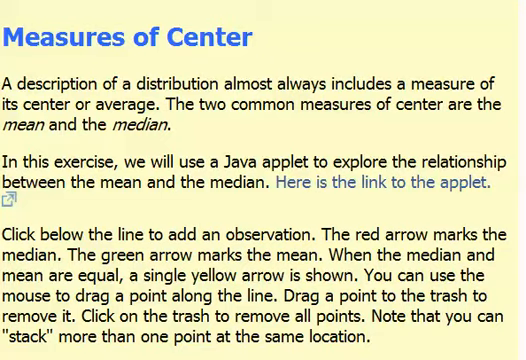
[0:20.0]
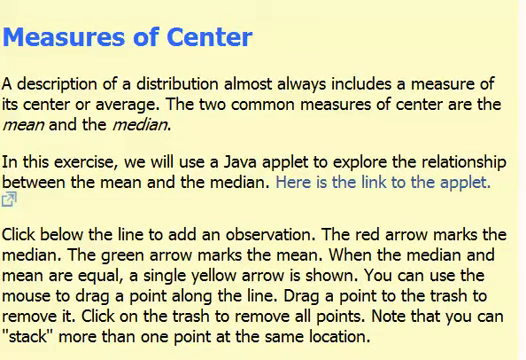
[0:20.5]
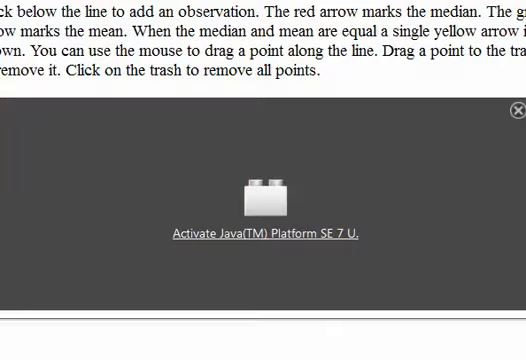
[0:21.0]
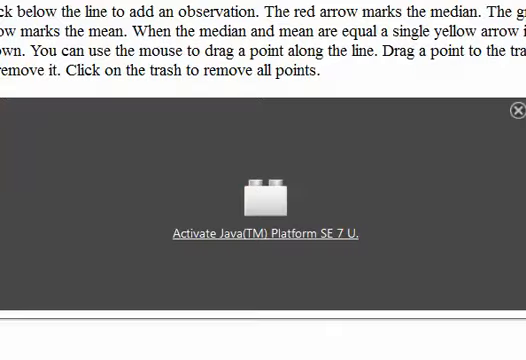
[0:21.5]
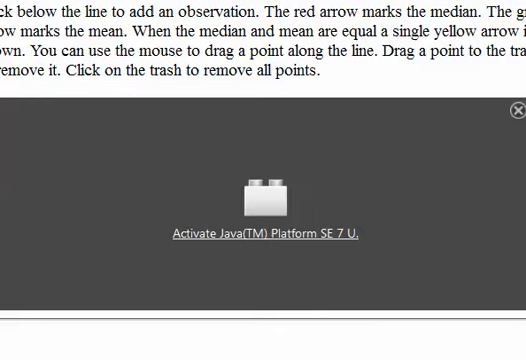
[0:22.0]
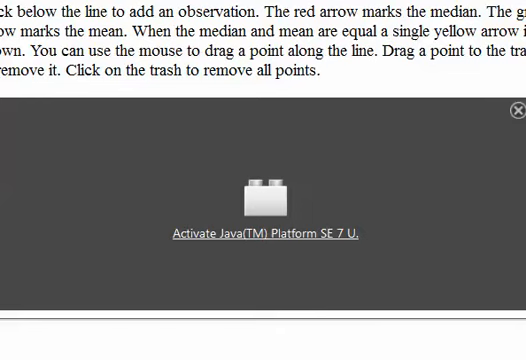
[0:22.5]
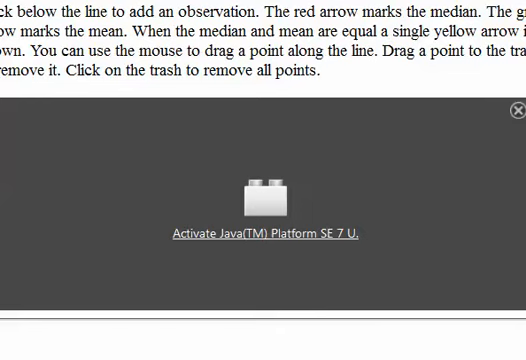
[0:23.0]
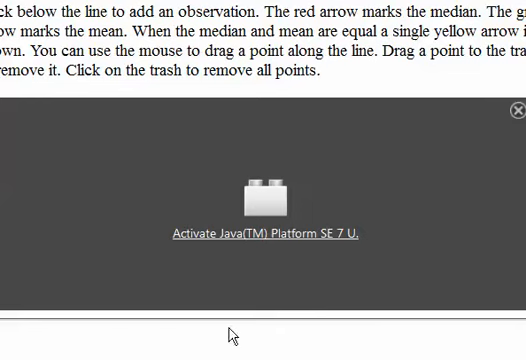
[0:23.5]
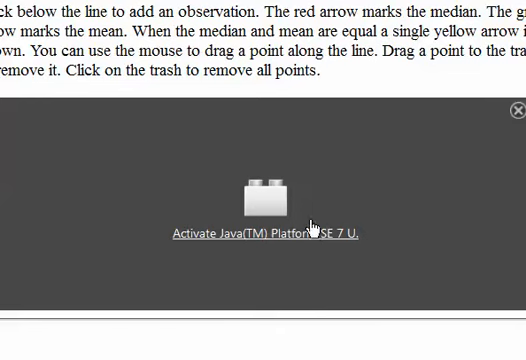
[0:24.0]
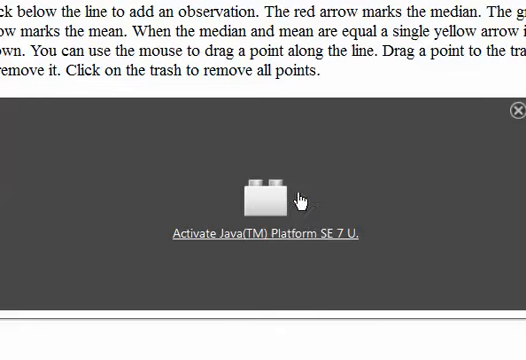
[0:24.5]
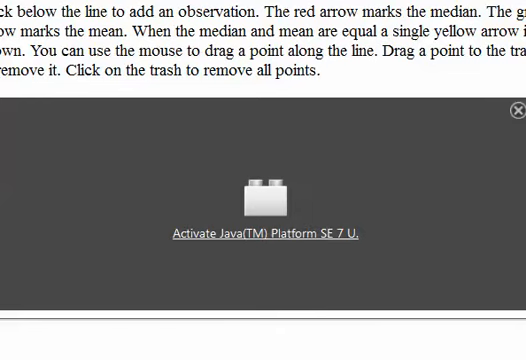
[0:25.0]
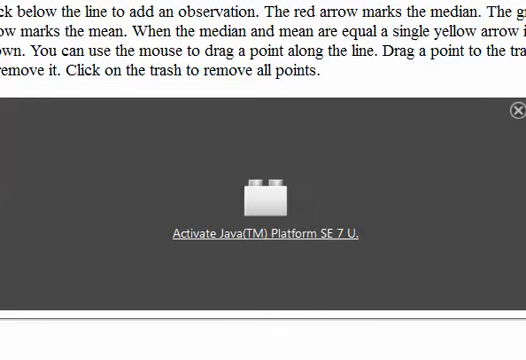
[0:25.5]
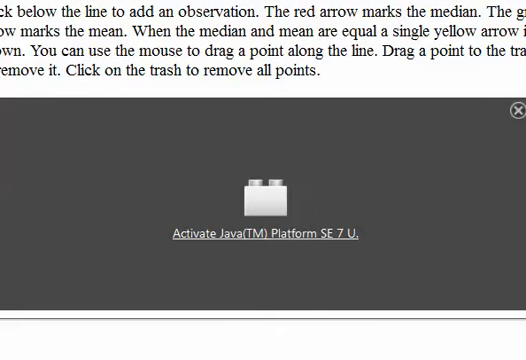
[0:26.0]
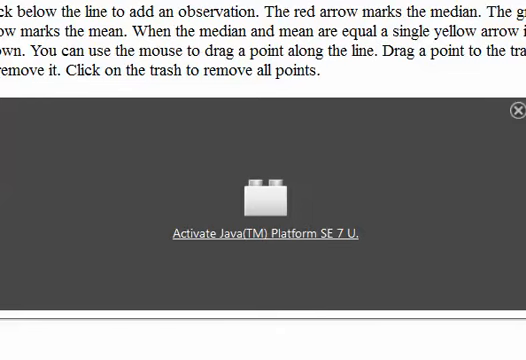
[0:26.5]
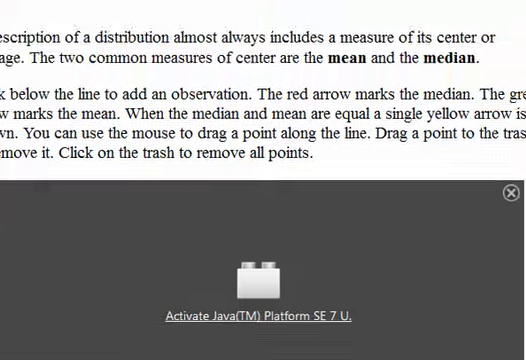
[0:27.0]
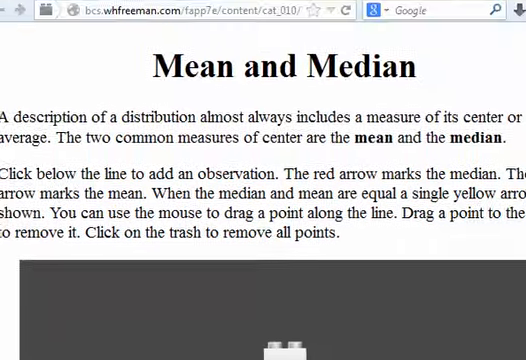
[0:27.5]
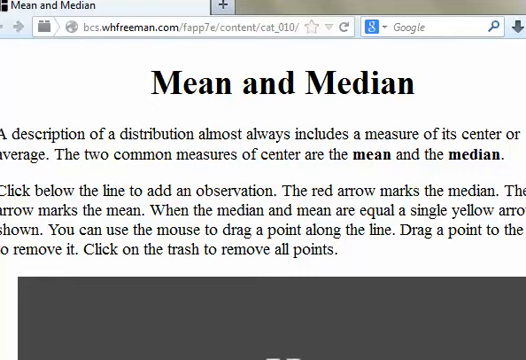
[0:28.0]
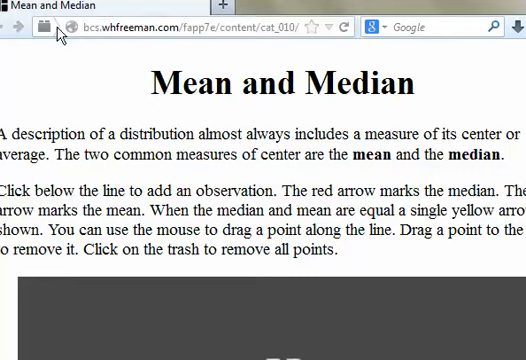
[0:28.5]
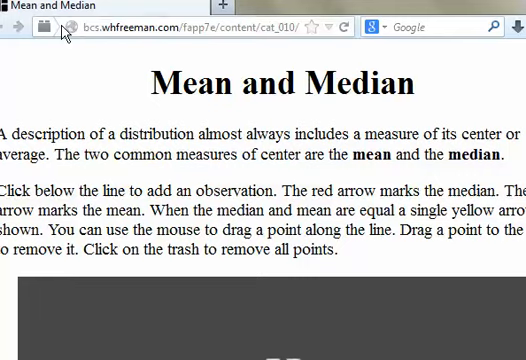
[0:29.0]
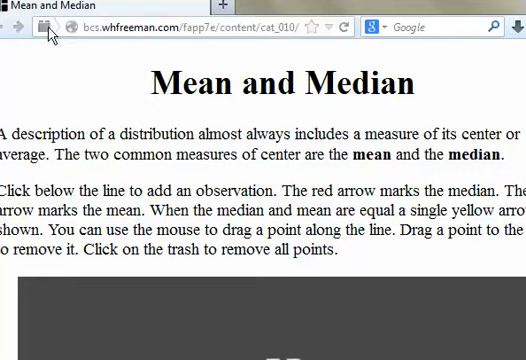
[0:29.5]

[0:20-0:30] The page shows the text under the measures of center heading: "a description of a distribution always includes a measure of its center or average. The two common measures of center are the mean and the median." The video then transitions to another page with a Java applet in its bottom part that has not been activated; the applet area says "activate Java platform se7u." Above the applet is a description that is mostly cut off, though its last sentence reads "click on the trash to remove all points."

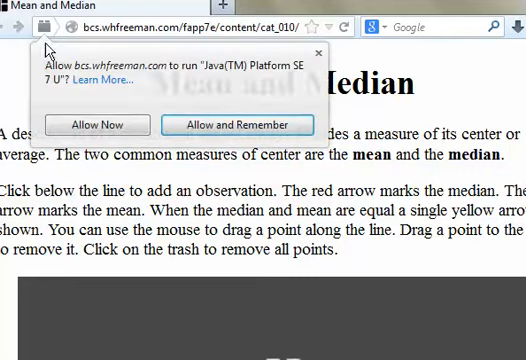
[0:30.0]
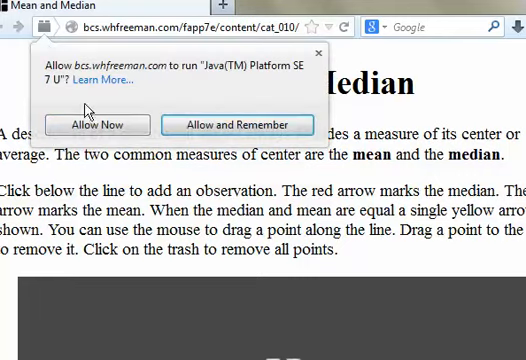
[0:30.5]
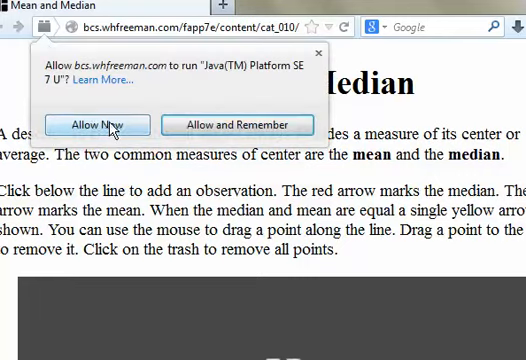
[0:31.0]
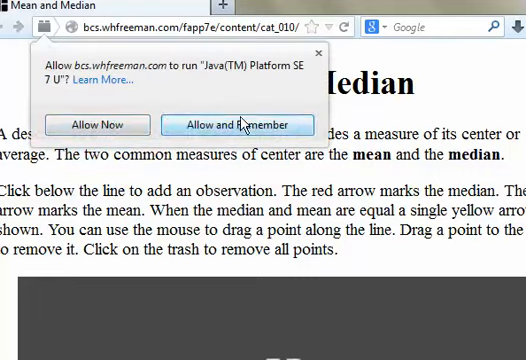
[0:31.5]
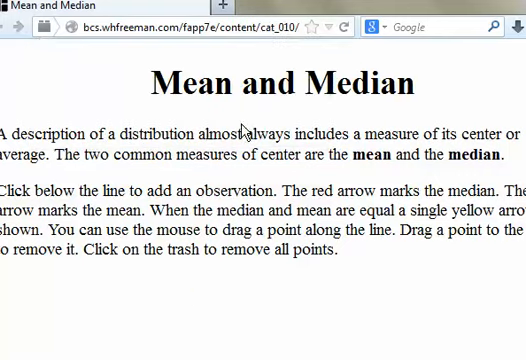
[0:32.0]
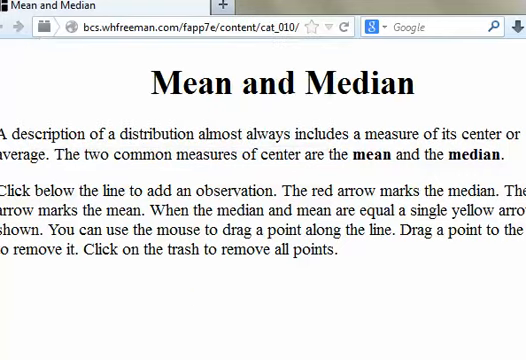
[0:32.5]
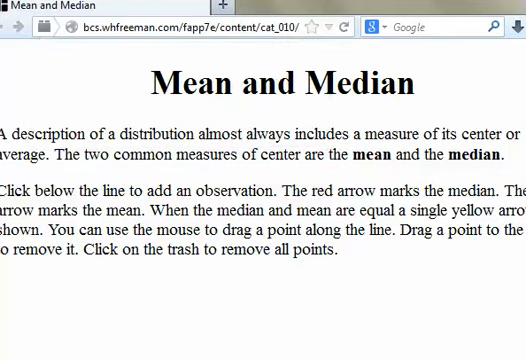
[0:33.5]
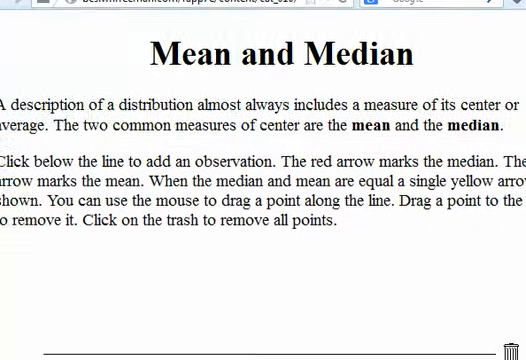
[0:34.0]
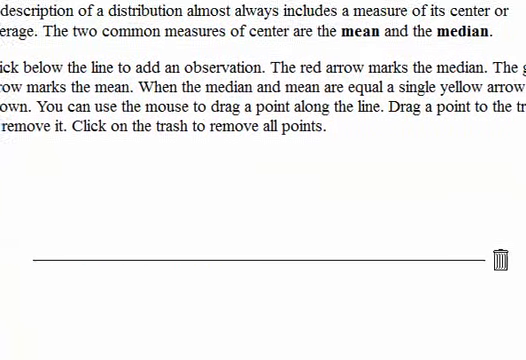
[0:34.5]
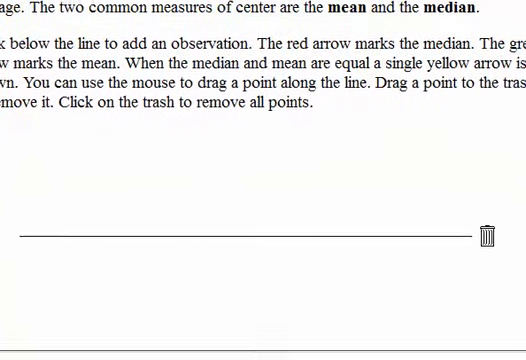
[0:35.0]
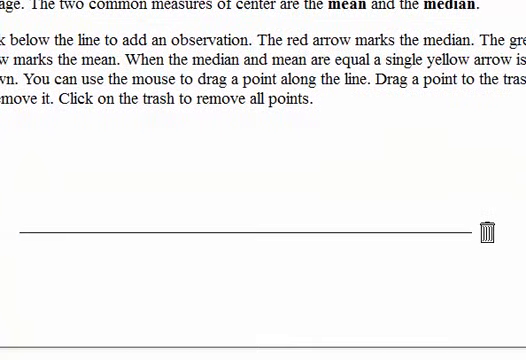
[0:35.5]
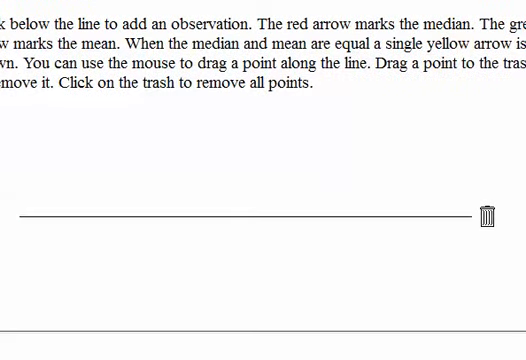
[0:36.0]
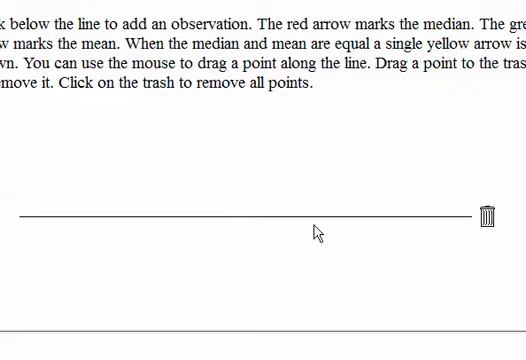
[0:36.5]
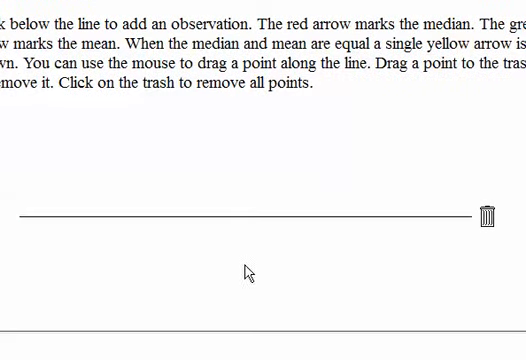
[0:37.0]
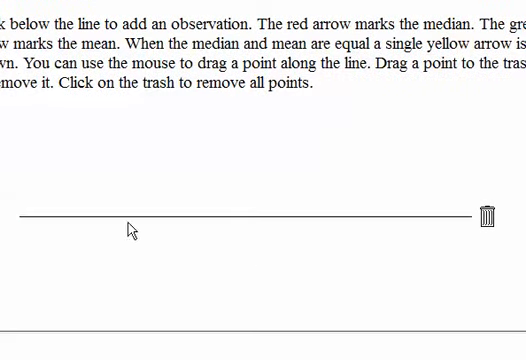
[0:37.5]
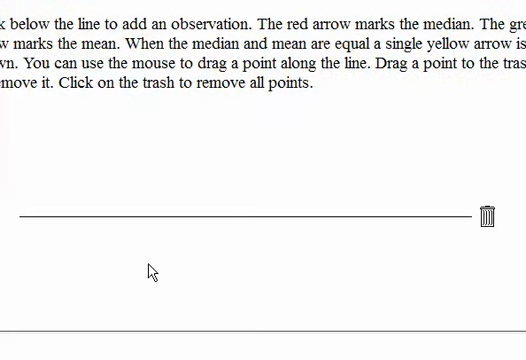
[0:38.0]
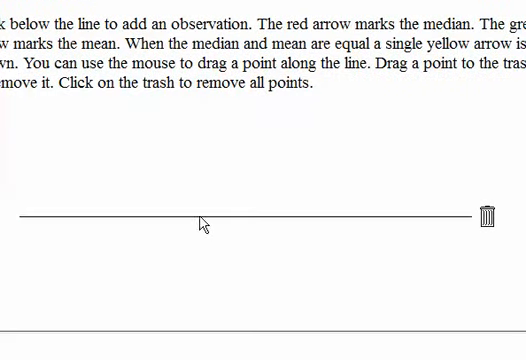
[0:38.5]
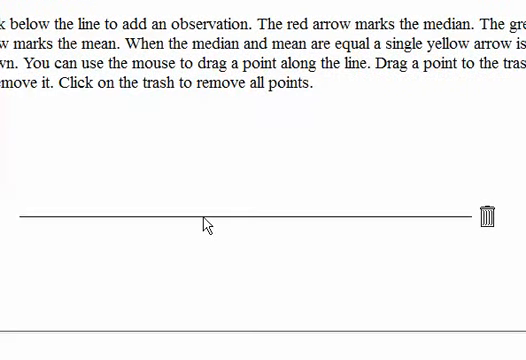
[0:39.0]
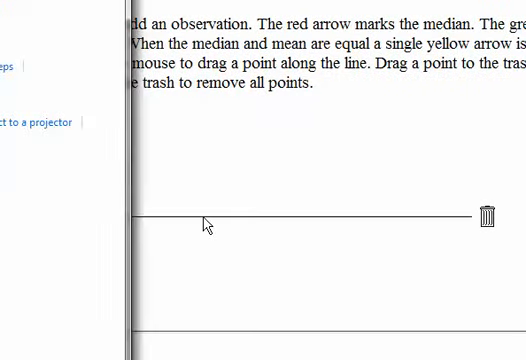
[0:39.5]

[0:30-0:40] A web browser is shown with an open tab named "Mean and Median." The options button next to the web address in the address bar has been clicked, and below it a dialog box is open asking to allow a site to run "Java Platform SE7U," with two button choices, "Apply Now" and "Allow and Remember." The mouse clicks "Allow and Remember." The page with the mean and median definitions then appears, and the user scrolls down to the area just underneath the definitions and clicks on the bar, or line, on the page.